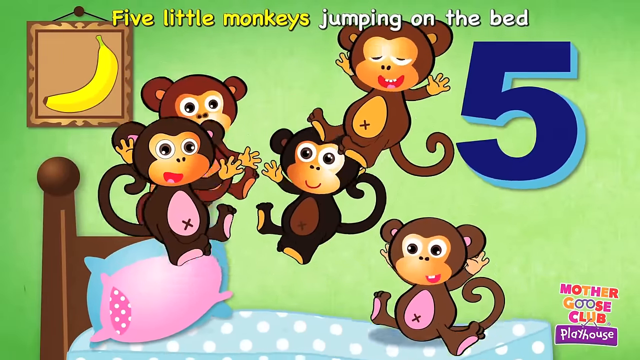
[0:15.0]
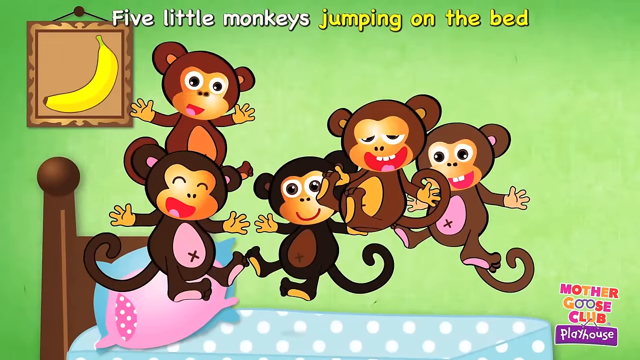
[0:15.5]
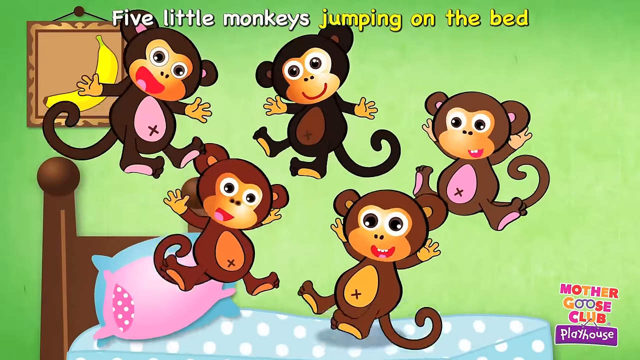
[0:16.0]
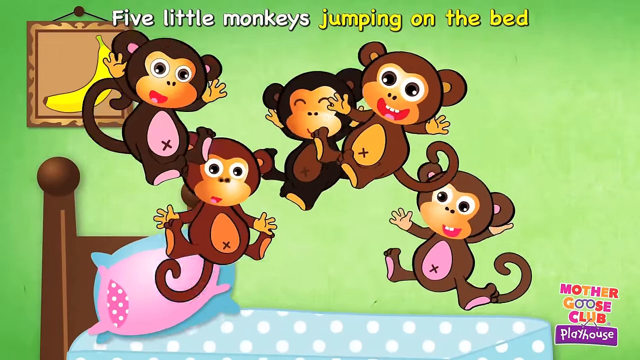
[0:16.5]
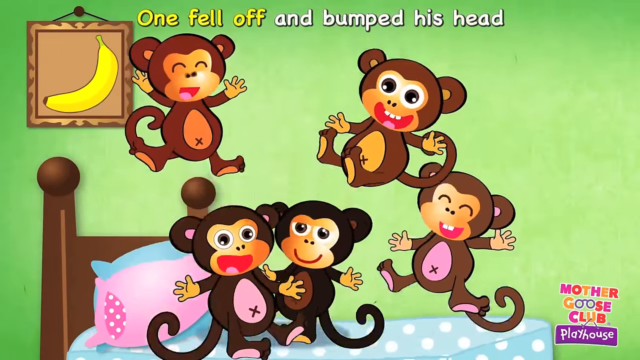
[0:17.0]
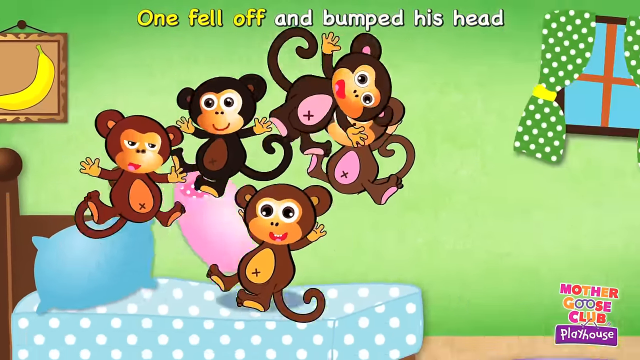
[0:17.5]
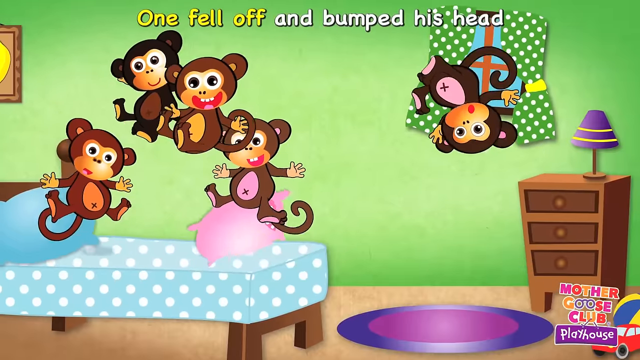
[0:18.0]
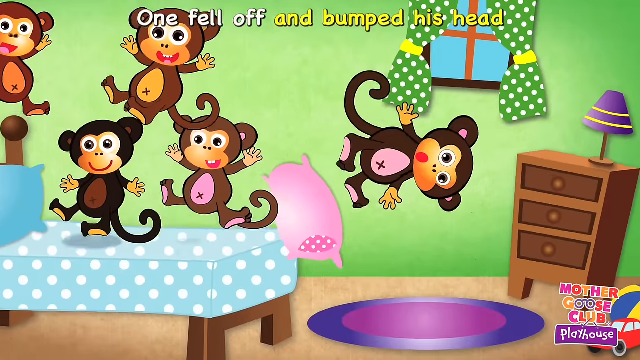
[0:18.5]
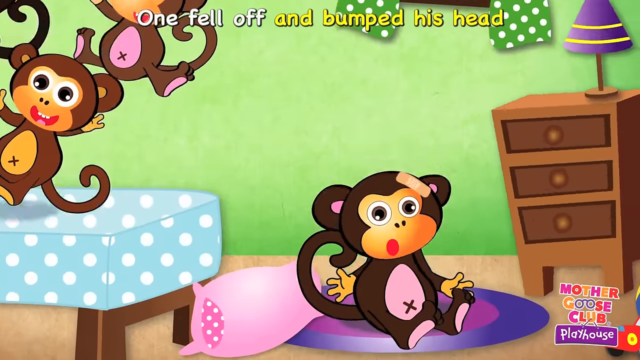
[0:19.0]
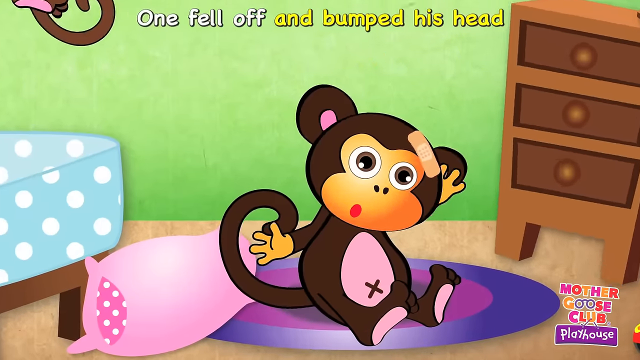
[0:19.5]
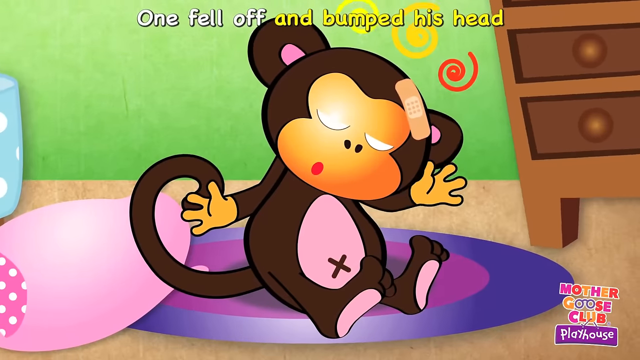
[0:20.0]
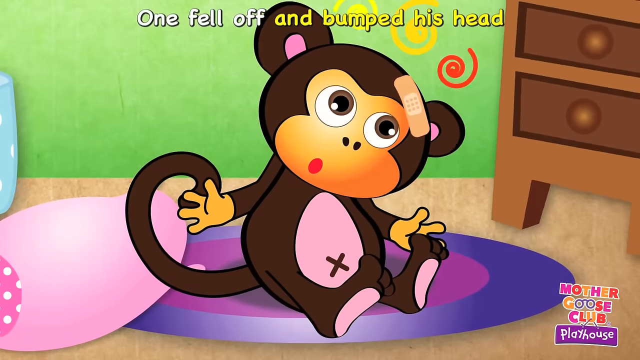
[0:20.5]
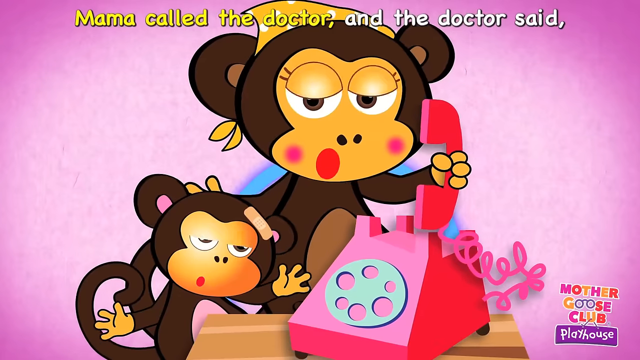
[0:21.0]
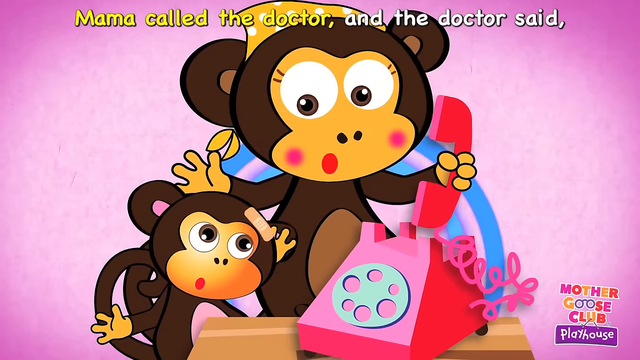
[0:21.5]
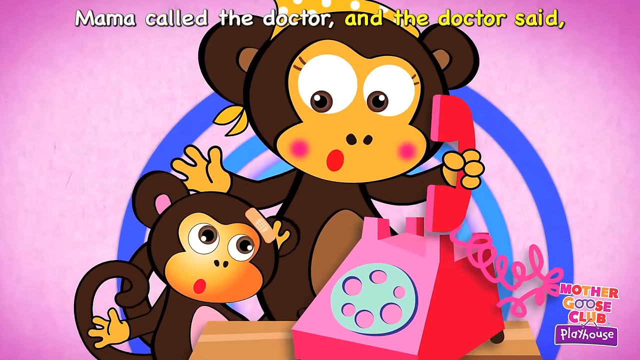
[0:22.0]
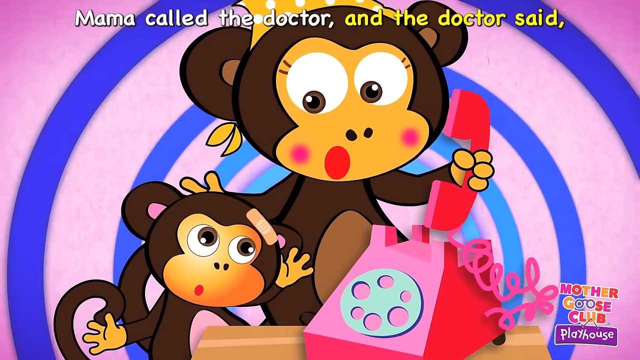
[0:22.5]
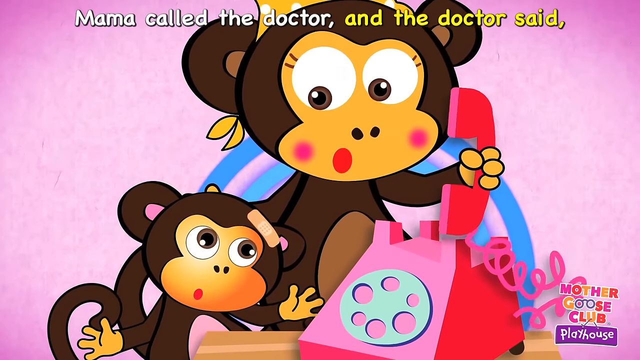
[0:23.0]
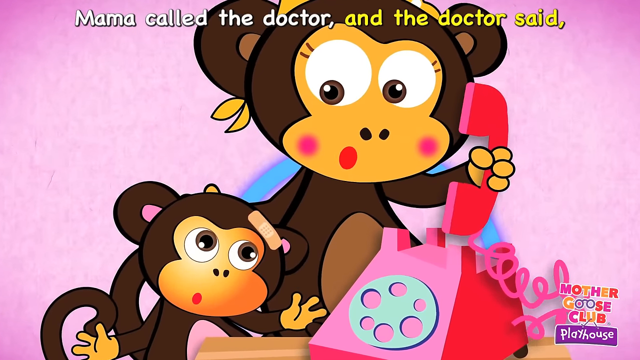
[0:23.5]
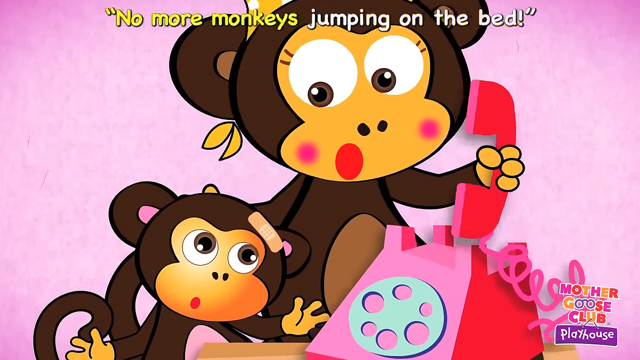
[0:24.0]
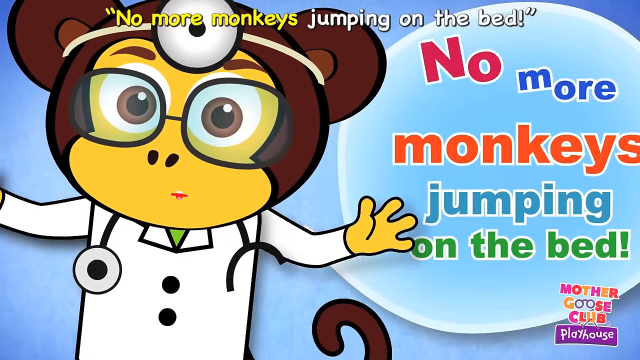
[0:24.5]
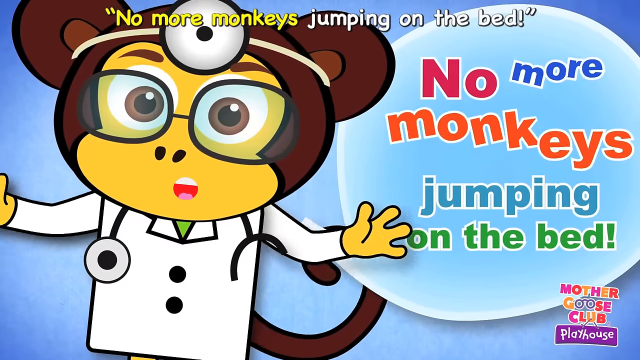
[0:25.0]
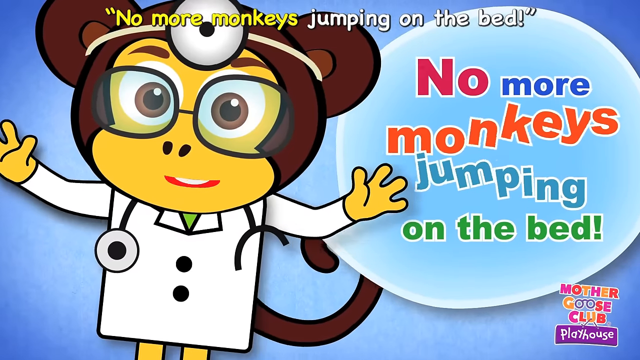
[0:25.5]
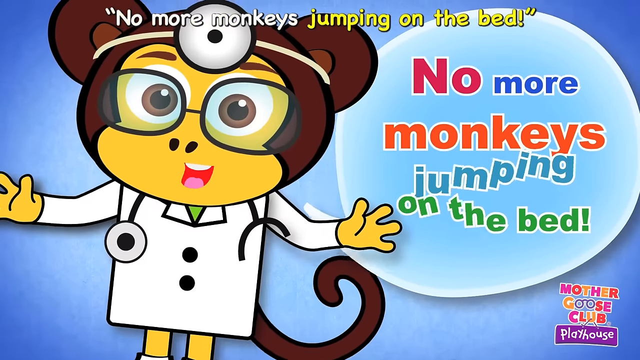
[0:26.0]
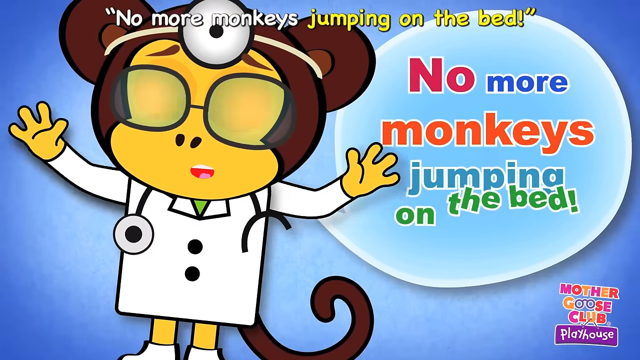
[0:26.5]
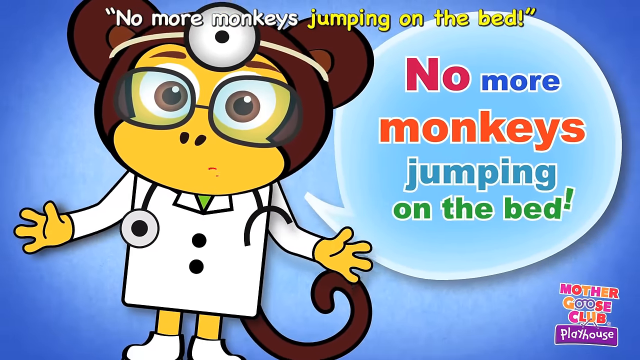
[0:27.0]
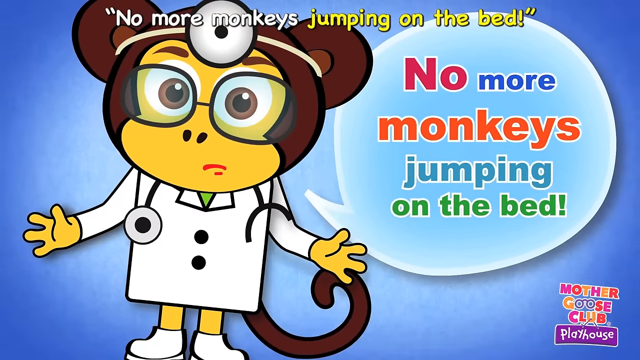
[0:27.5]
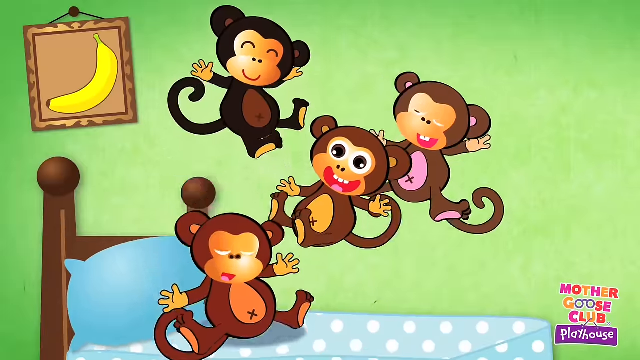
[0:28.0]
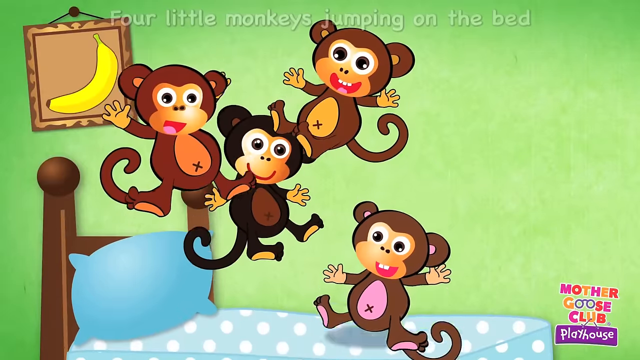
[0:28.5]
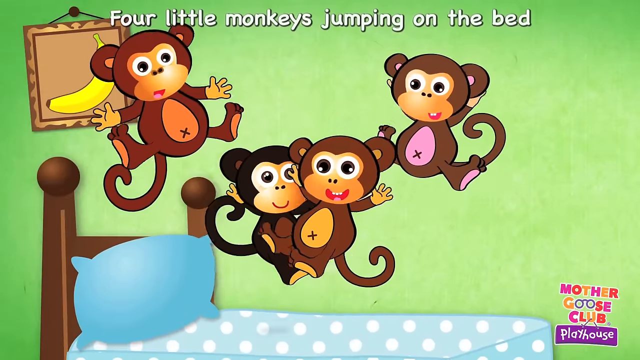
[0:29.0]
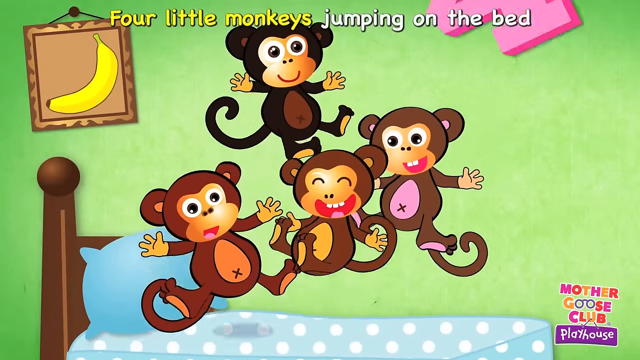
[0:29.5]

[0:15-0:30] Five monkeys, three brown and two black, jump on the bed. One of them falls off: a black monkey with a pink belly, who gets a little bandaid on his head. The mama monkey, brown with brown ears, a brown tummy and a red mouth, calls the doctor on a pink, old rotary dial phone, and blue concentric circles pop out as she talks. The doctor wears glasses and a white lab coat with a little green underneath, white shoes, and has brown eyes and a little seam thing on her head. The doctor says "no more monkeys jumping on the bed," and the words appear in different colors: pink, blue, orange and green. The monkeys jump again, and another black monkey with pink ears and a pink belly jumps up and falls off. The bed is covered in blue and white polka dots, and a window in the back has green and white polka dots. A number appears, going from five to four. The falling monkey hits a three-drawer dresser and shakes it up, and there is a lamp with a purple shade on top of the desk.